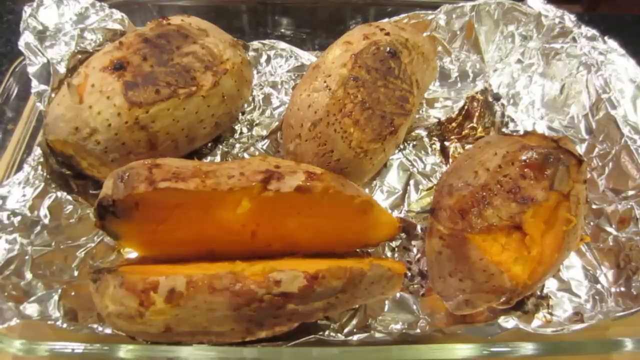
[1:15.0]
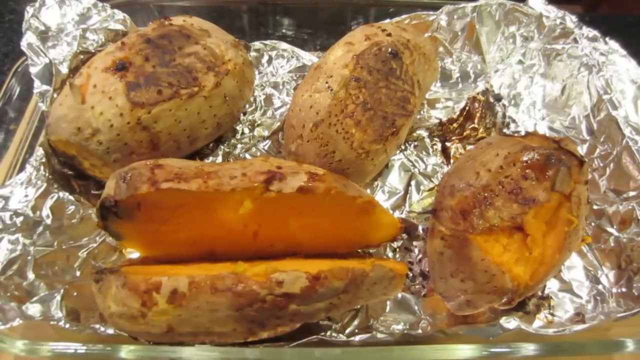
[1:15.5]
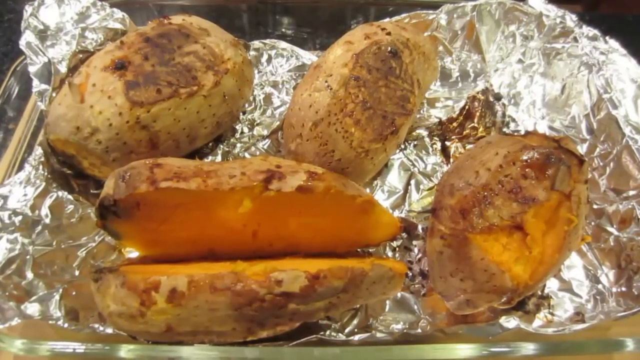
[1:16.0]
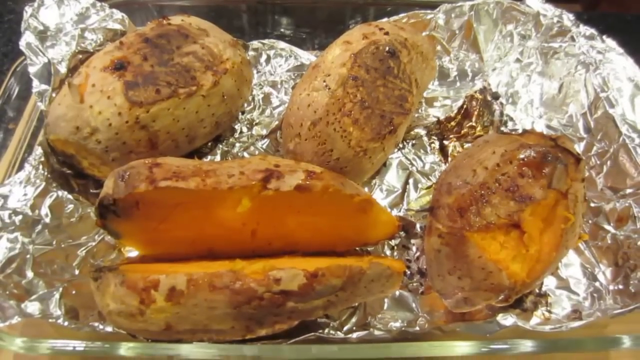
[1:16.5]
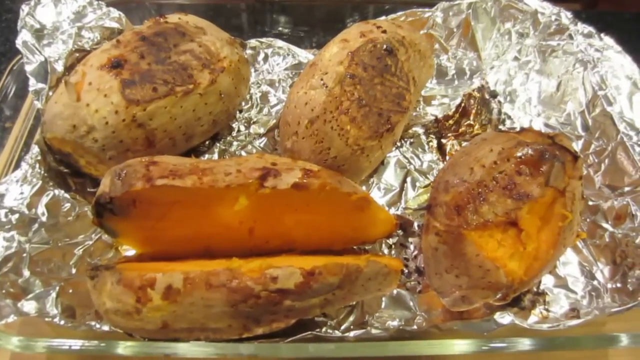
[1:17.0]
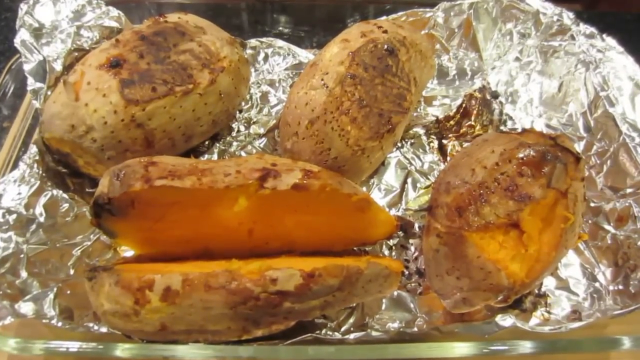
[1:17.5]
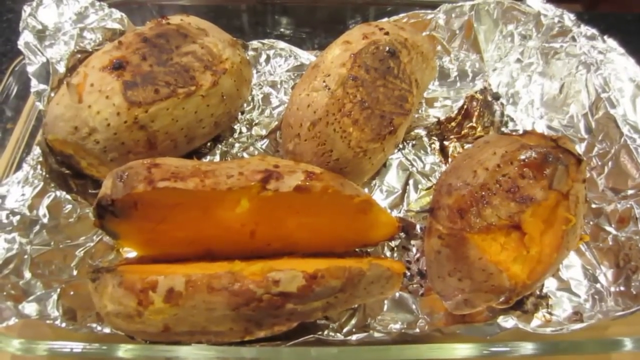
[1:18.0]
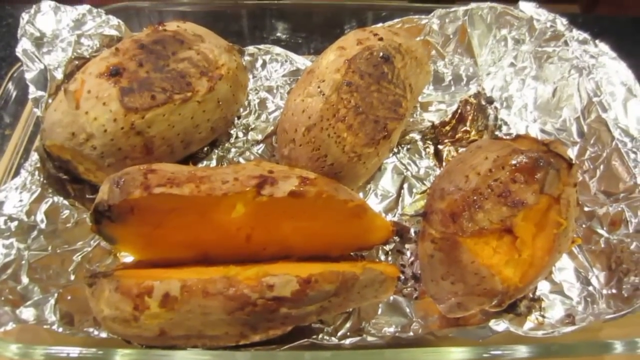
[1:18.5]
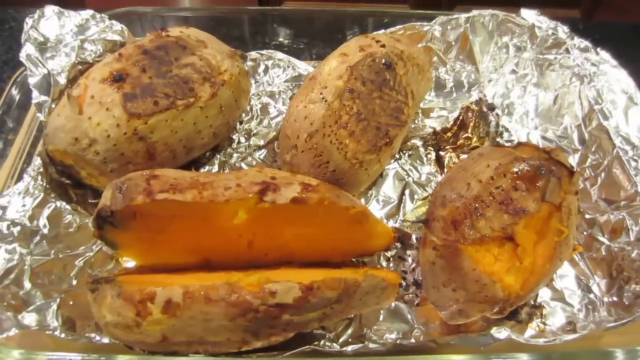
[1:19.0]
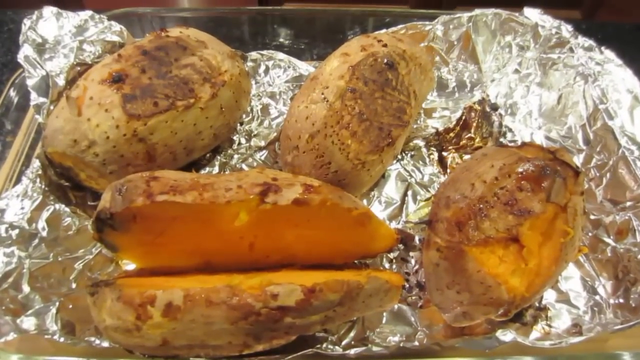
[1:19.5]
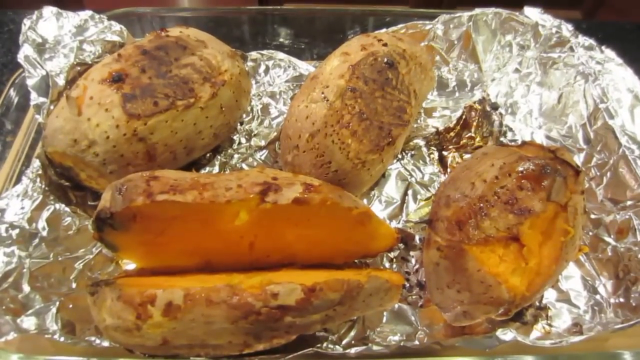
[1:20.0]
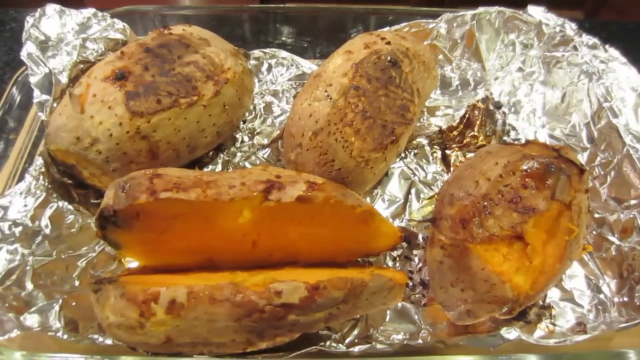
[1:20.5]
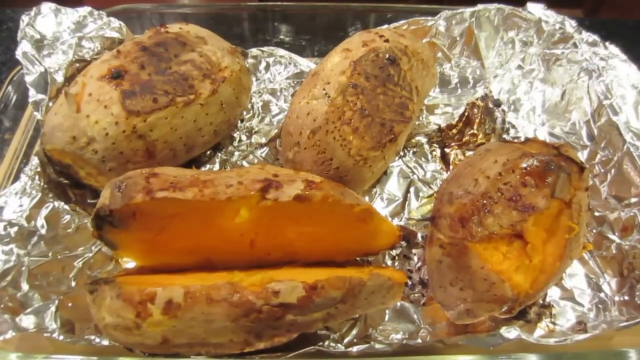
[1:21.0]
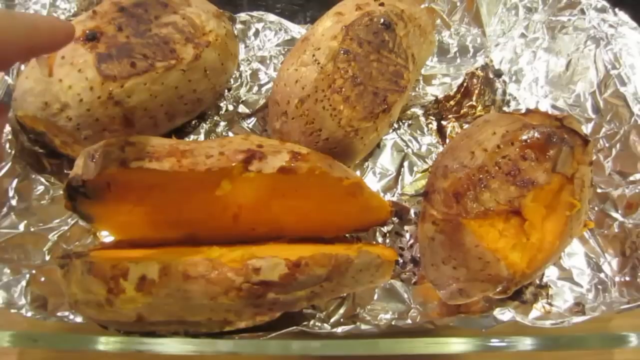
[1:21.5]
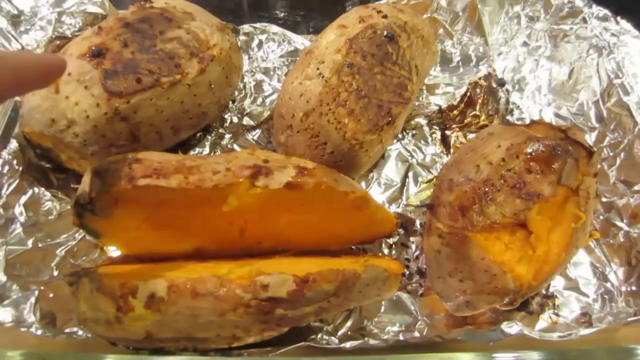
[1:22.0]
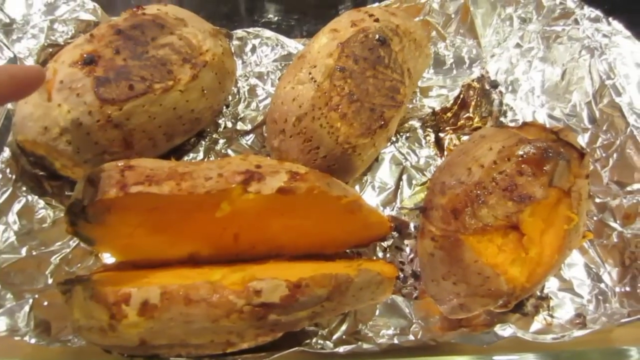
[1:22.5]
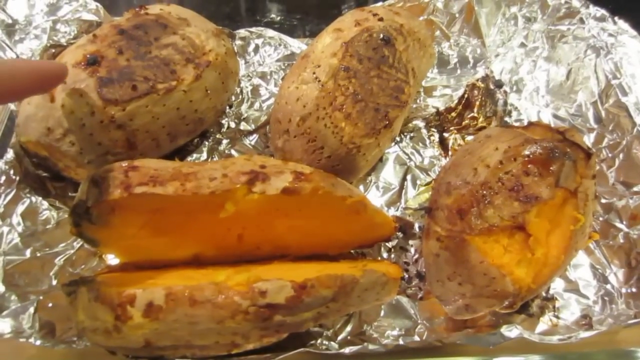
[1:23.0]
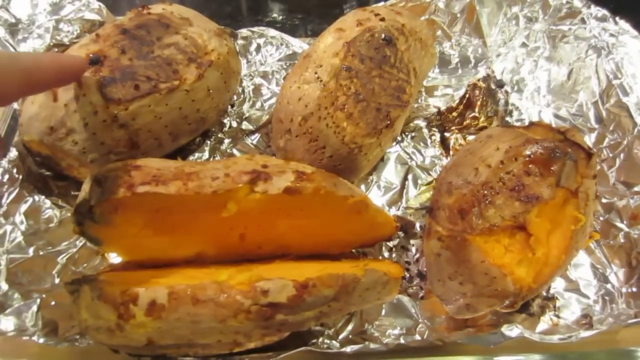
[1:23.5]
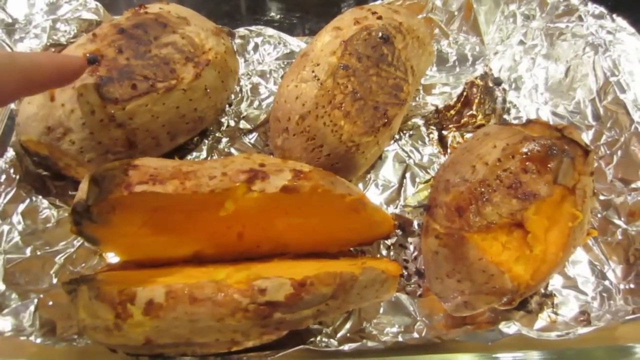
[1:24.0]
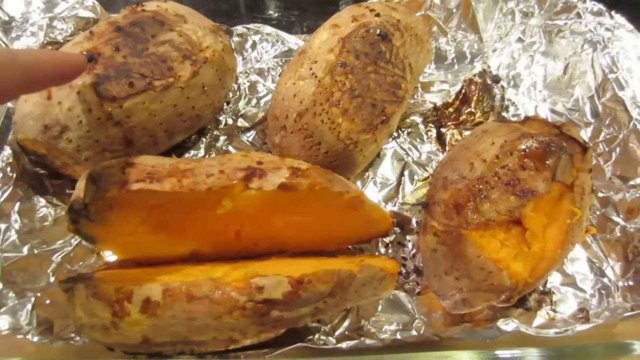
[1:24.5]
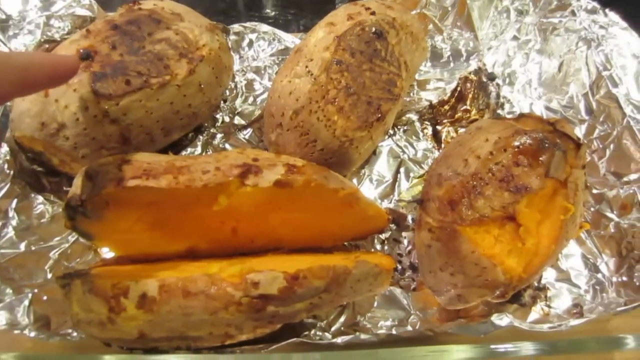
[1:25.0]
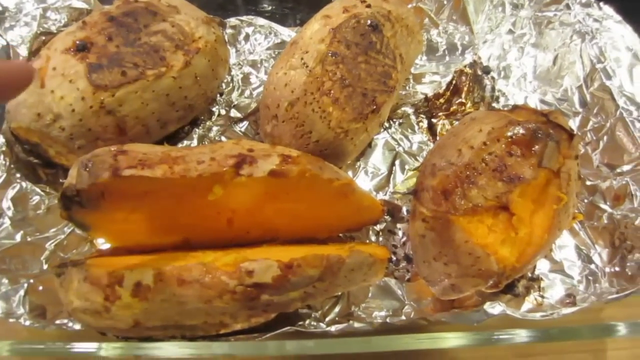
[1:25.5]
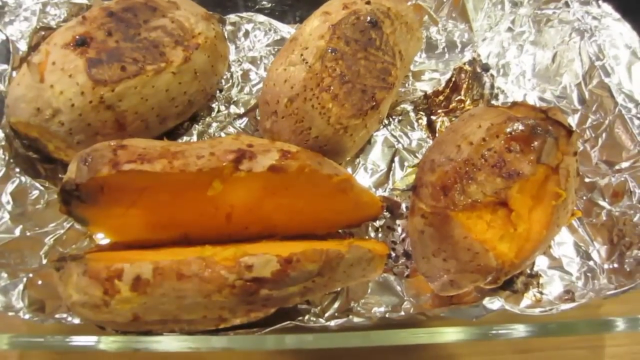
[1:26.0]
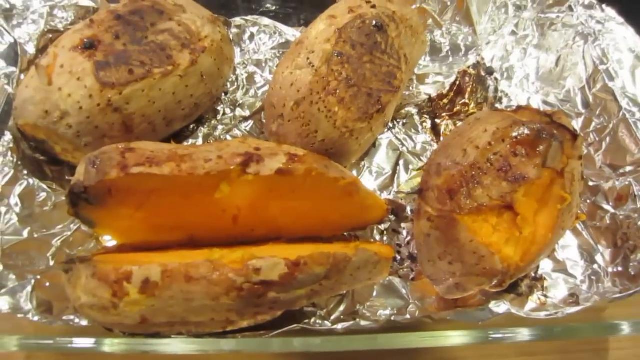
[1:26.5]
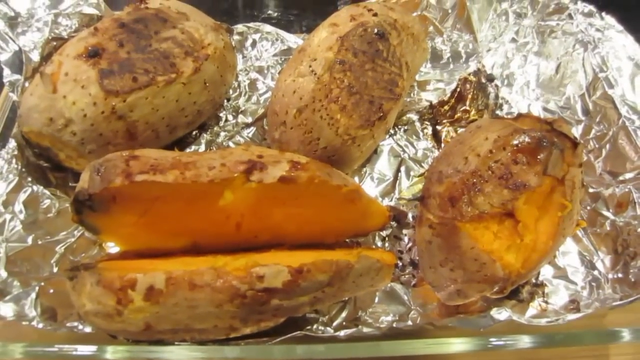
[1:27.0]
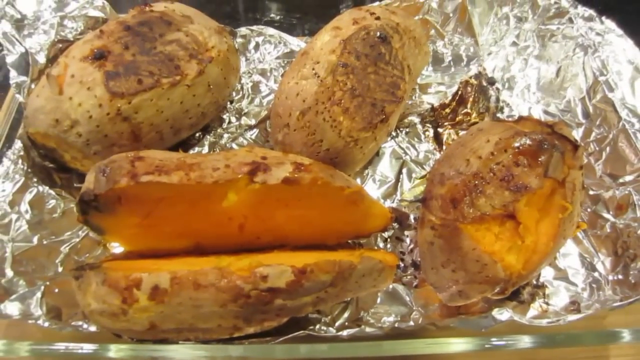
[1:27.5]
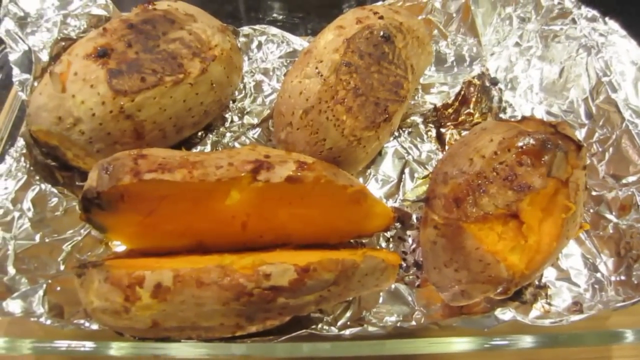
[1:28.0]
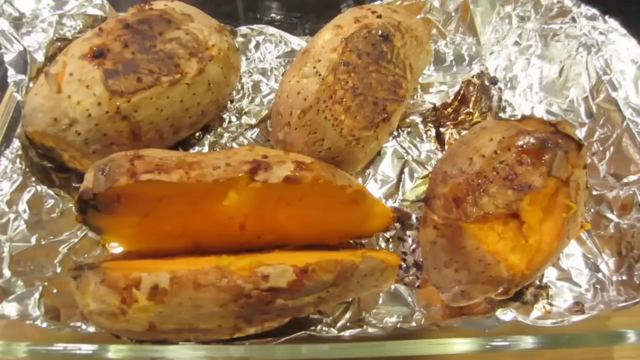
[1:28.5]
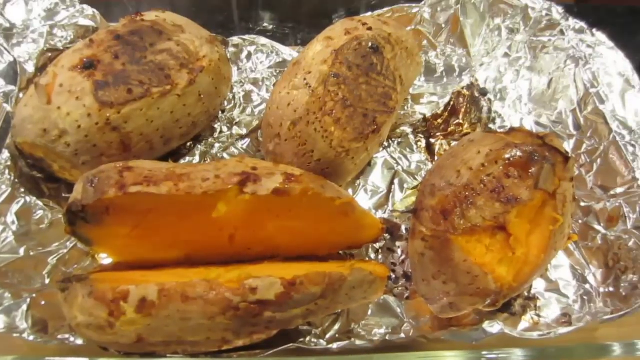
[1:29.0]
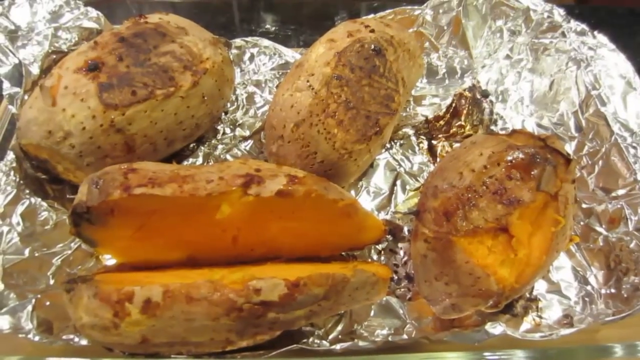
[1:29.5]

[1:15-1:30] Four cooked sweet potatoes are seen from the top down in a deep glass baking dish, on crumpled, dirty aluminum foil that looks like it has some grease or oil on it. Three of the sweet potatoes have not been cut open and have a black outer crust; they face up, slightly skewed to the right, with their skins visible. A finger on the left side of the frame points at one of these sweet potatoes, at a burnt spot on its skin. The finger appears only once, toward the beginning, pointing at the potato on the left side. In the foreground, another sweet potato lies completely horizontally and has been cut open on top, showing an all dark orange inside; it is the only one of the four that is cut open and the only one lying horizontally. The camera is a little shaky.